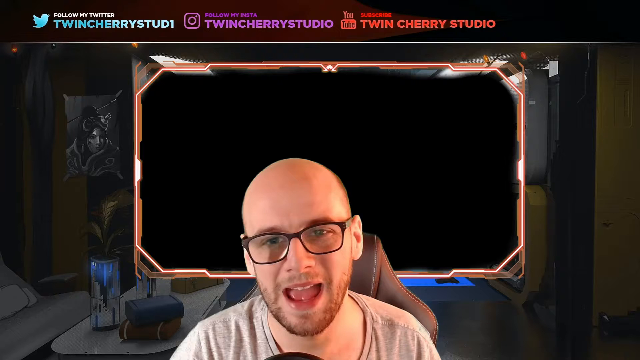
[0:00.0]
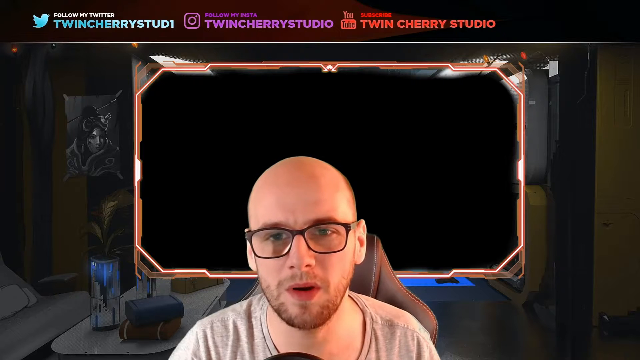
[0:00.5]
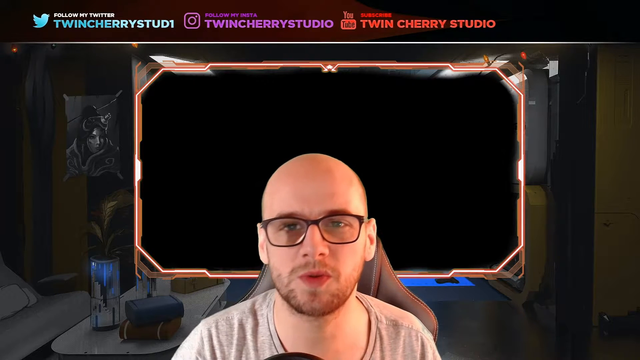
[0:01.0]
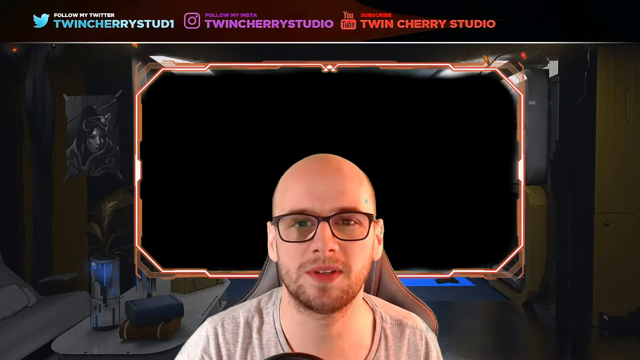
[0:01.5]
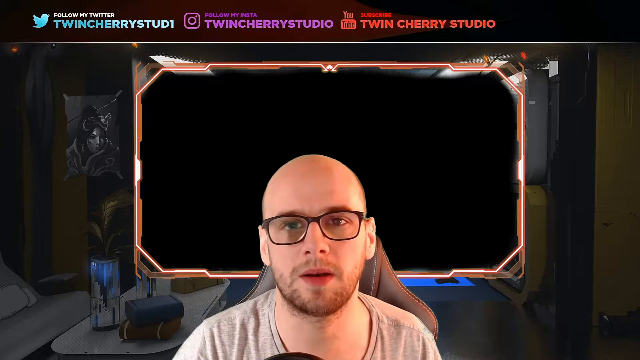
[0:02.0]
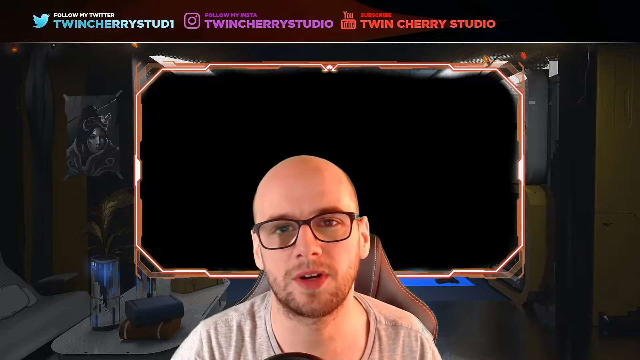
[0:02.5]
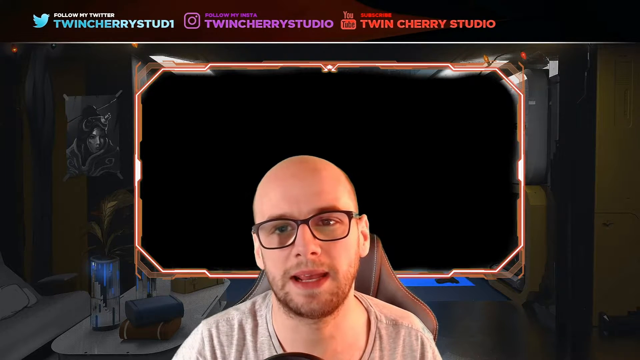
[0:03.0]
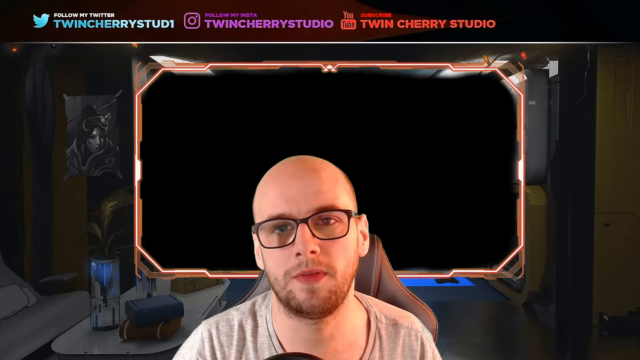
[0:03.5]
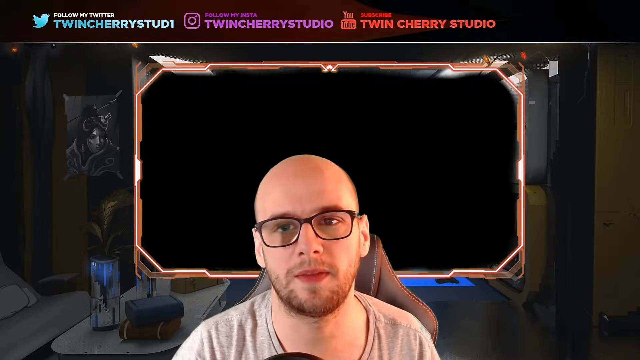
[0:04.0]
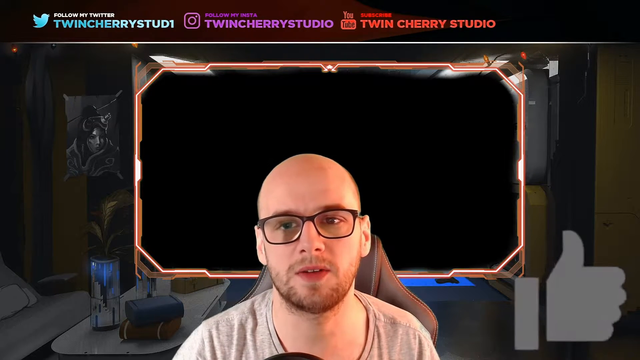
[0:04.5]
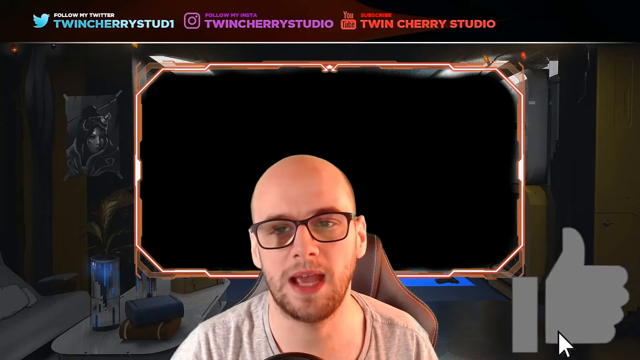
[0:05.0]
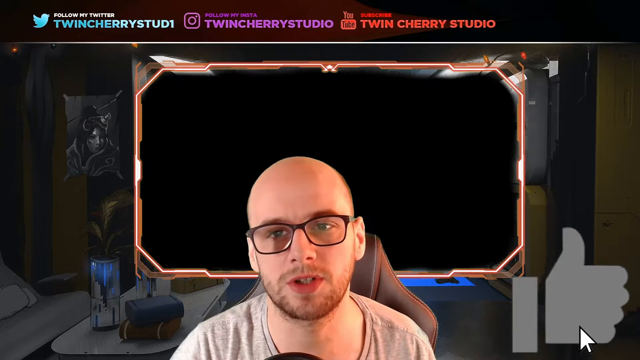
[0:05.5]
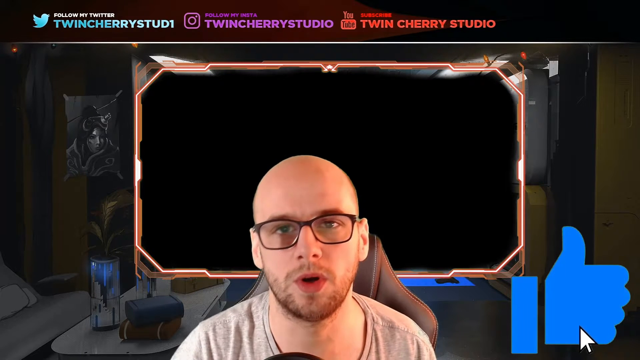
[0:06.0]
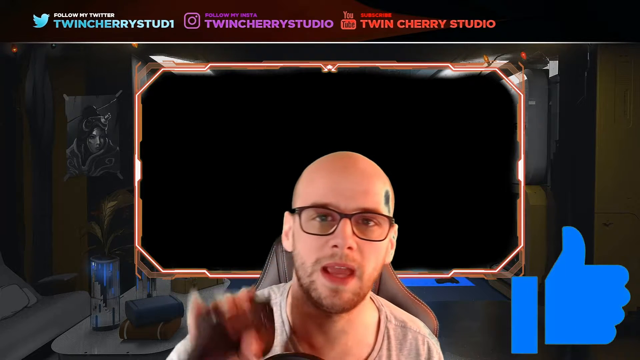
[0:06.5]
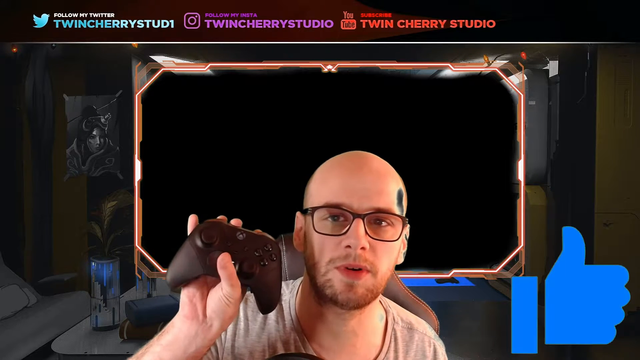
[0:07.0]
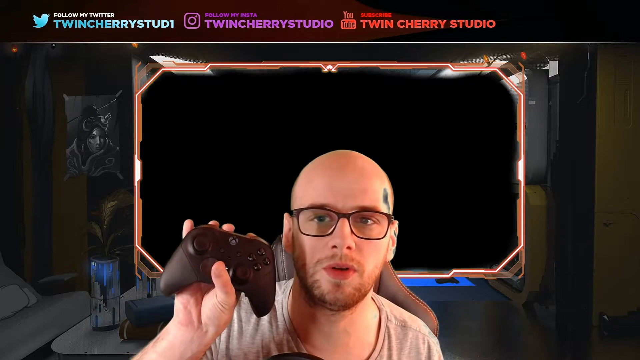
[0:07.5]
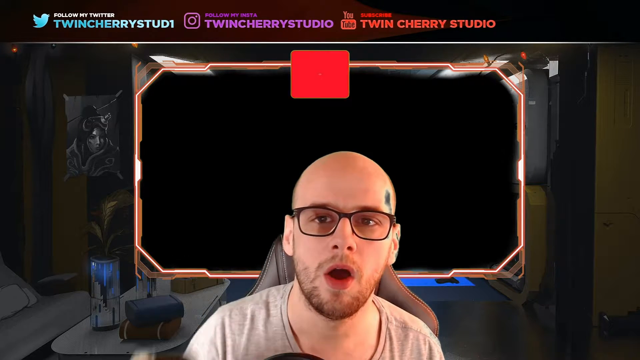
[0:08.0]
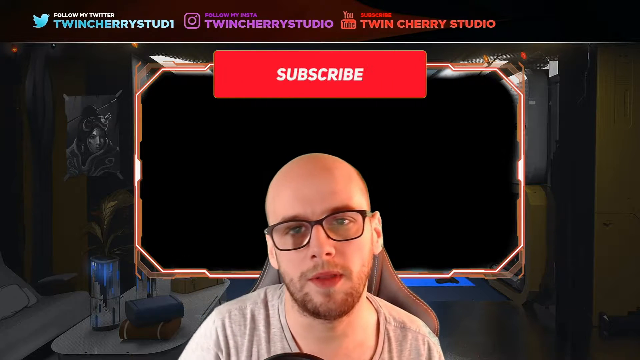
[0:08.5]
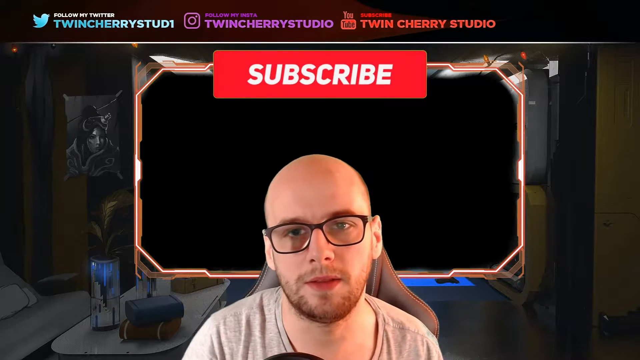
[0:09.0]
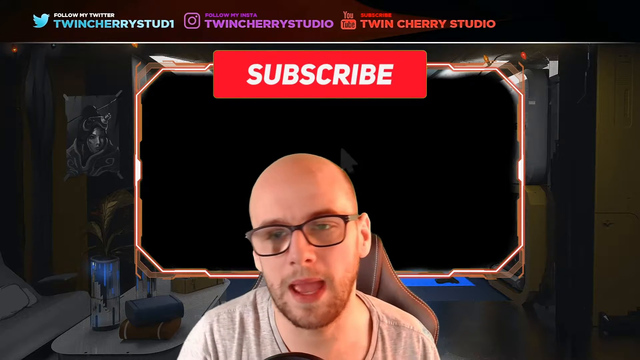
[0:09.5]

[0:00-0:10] A bald Caucasian man wearing dark-rimmed glasses, with a light brown mustache and beard, sits in front of a rectangle that looks like it might be part of a video game. At the top of the background, text invites viewers to follow him on Twitter at "twincherrystud1", then on Instagram at "twin cherry studio", and on YouTube, which also reads "twin cherry studio". The man talks while a thumbs up goes off on the right of the screen behind him, and "subscribe" appears right in the middle. In his left hand he holds up a video game controller that looks like it is from Xbox.